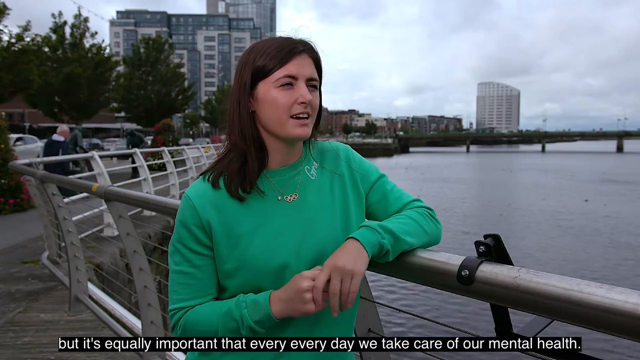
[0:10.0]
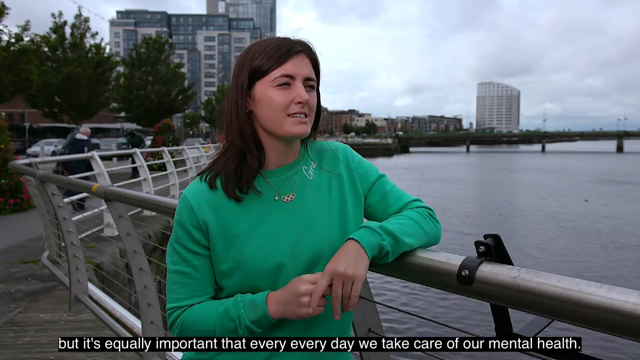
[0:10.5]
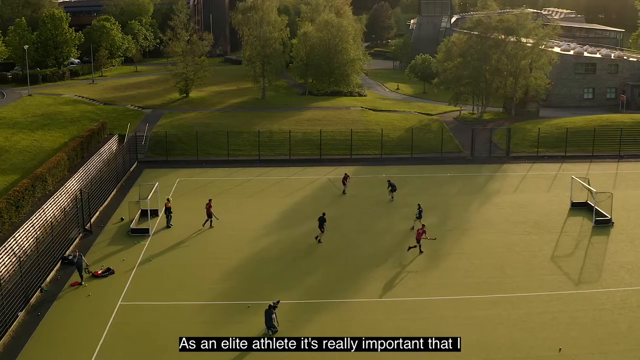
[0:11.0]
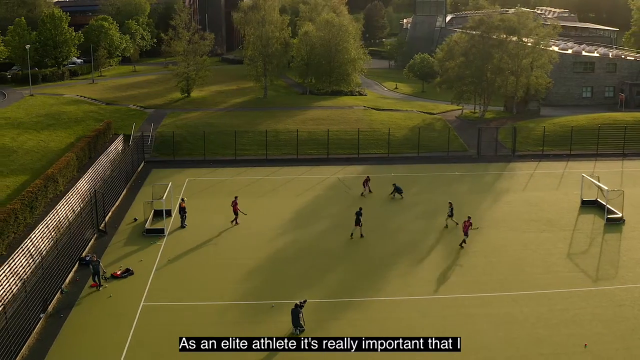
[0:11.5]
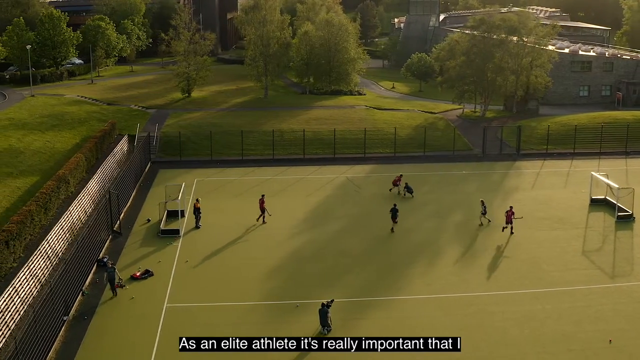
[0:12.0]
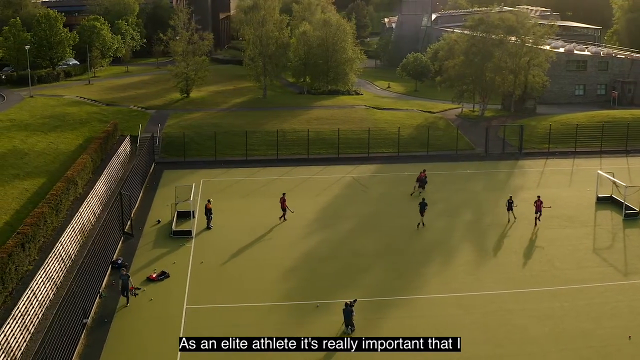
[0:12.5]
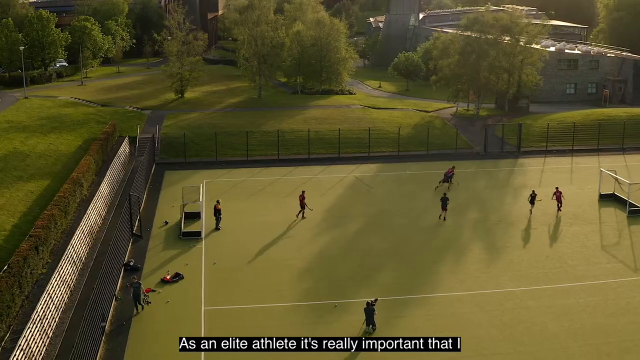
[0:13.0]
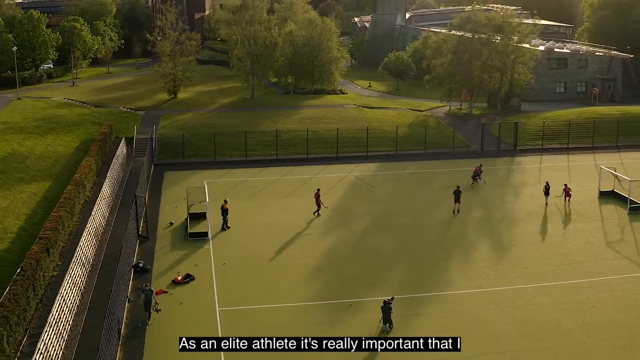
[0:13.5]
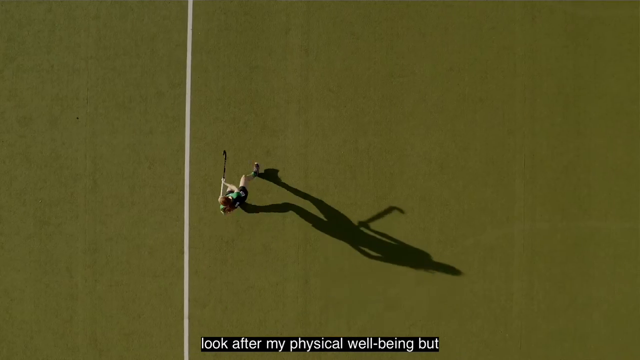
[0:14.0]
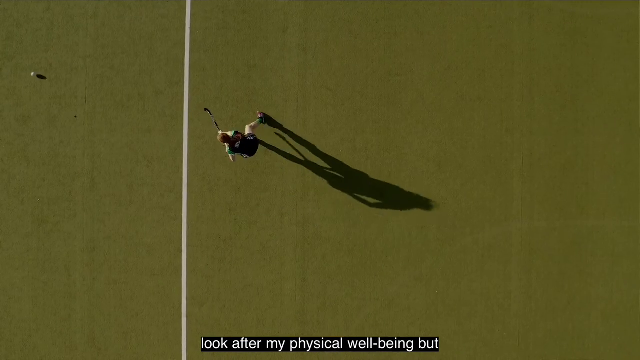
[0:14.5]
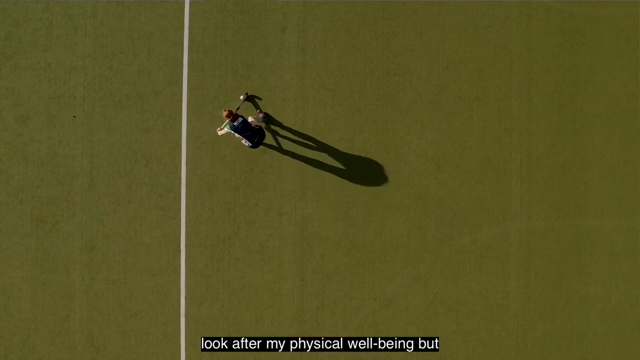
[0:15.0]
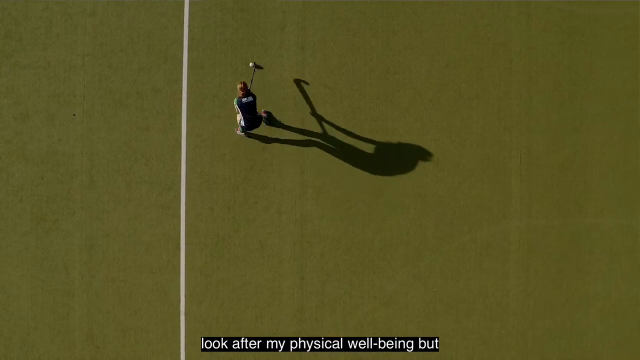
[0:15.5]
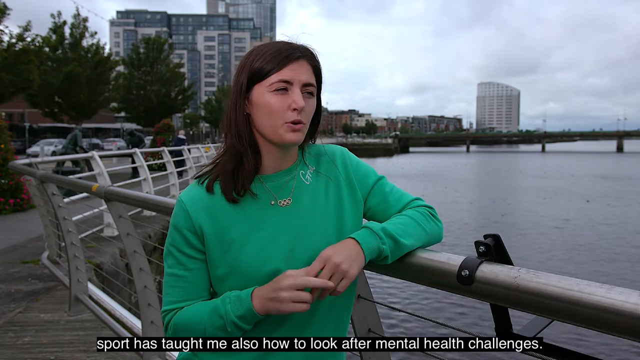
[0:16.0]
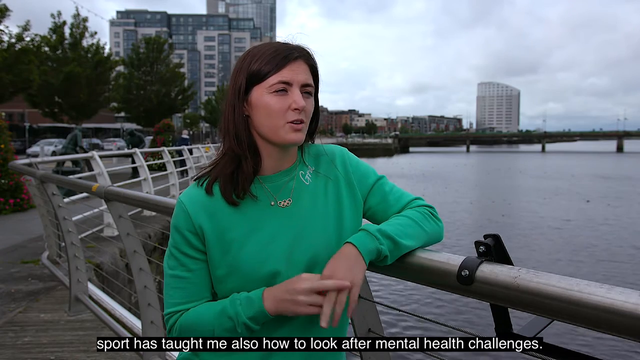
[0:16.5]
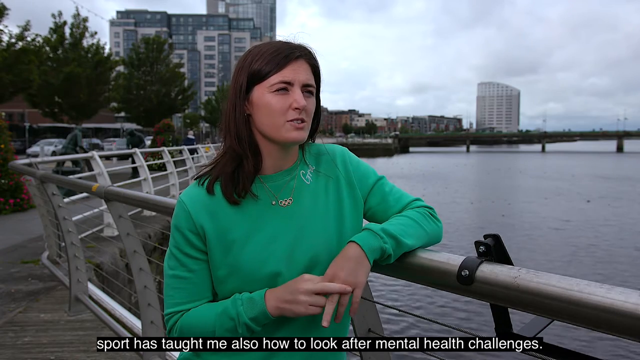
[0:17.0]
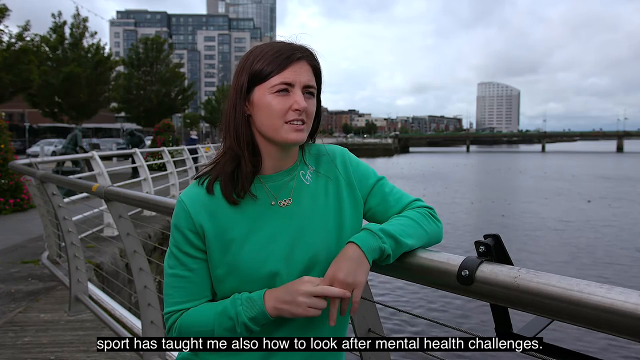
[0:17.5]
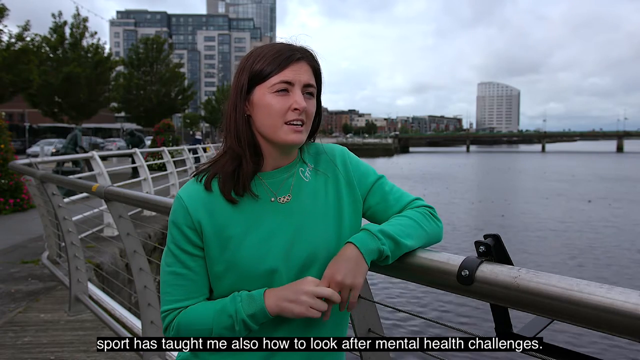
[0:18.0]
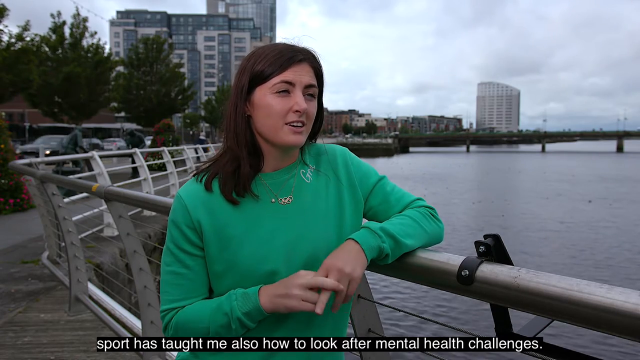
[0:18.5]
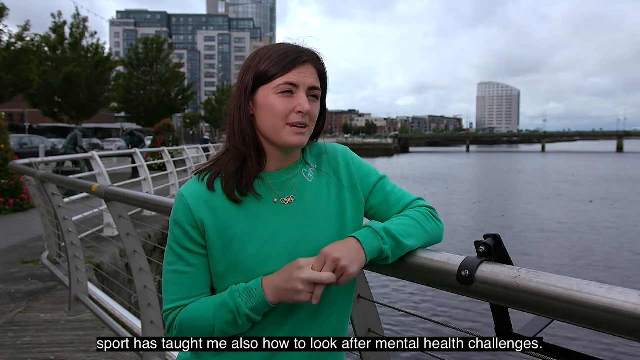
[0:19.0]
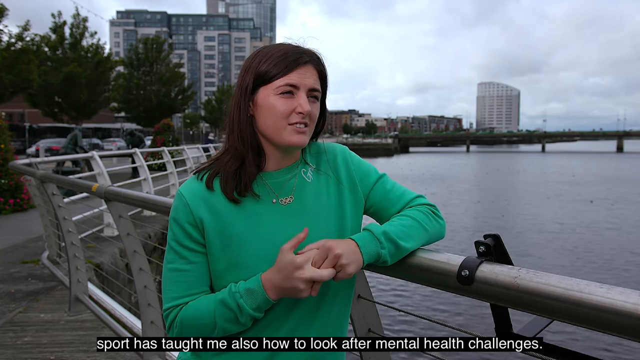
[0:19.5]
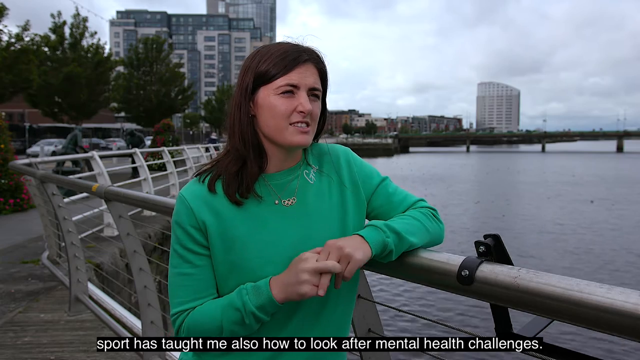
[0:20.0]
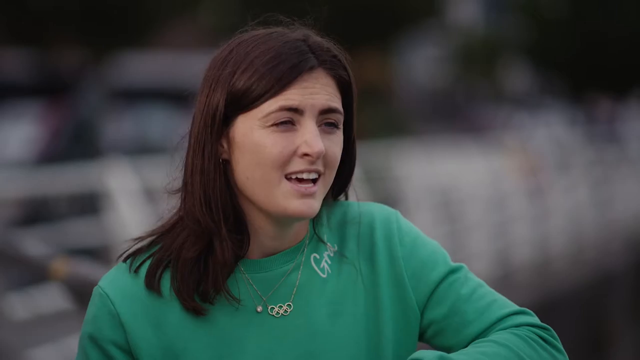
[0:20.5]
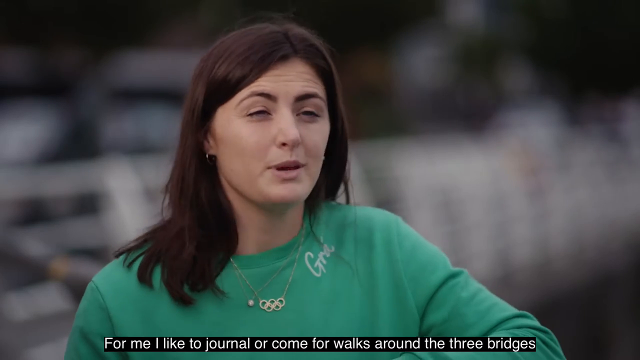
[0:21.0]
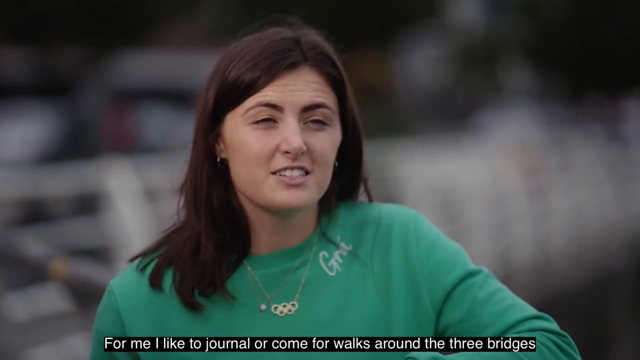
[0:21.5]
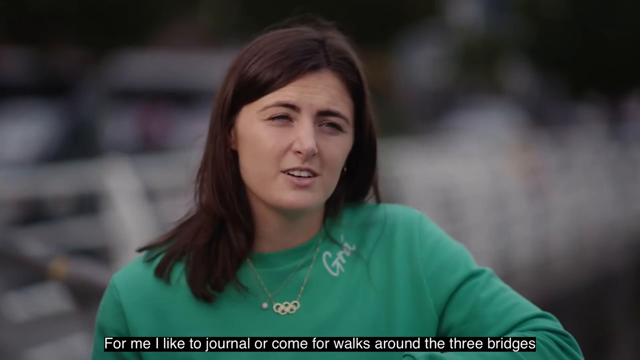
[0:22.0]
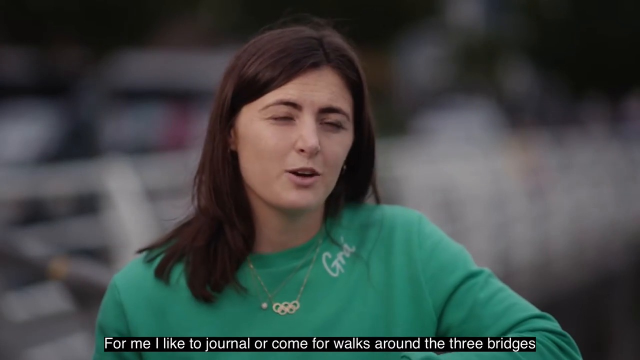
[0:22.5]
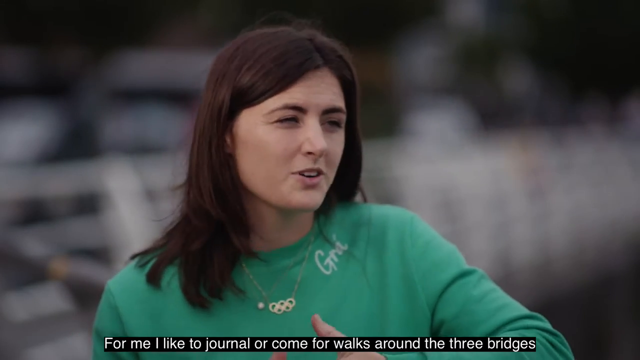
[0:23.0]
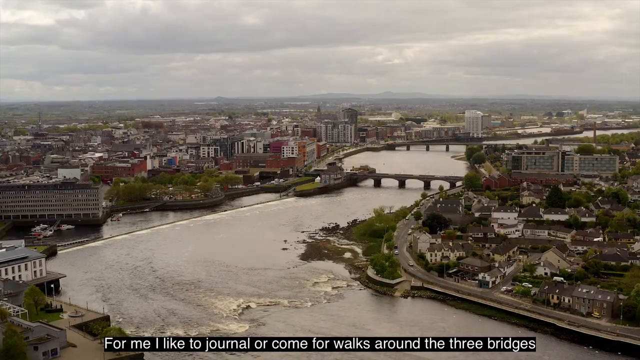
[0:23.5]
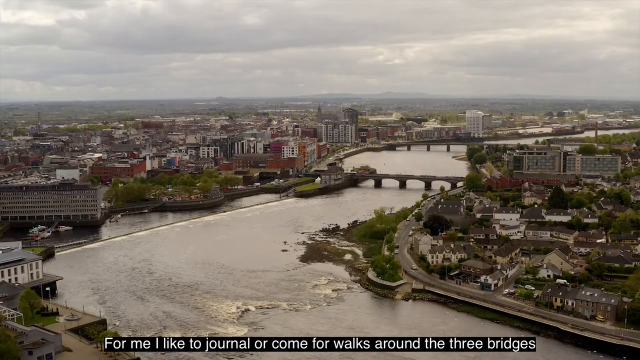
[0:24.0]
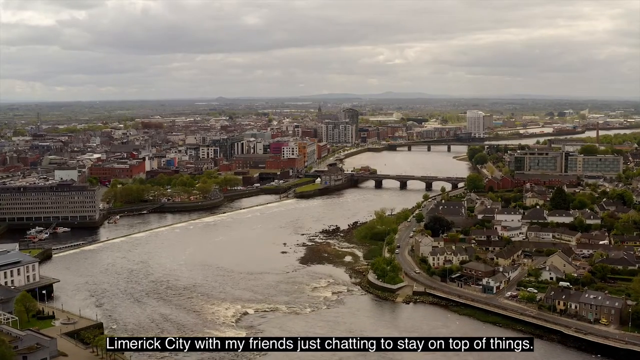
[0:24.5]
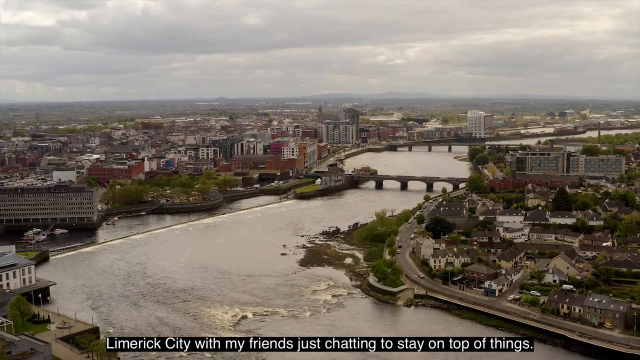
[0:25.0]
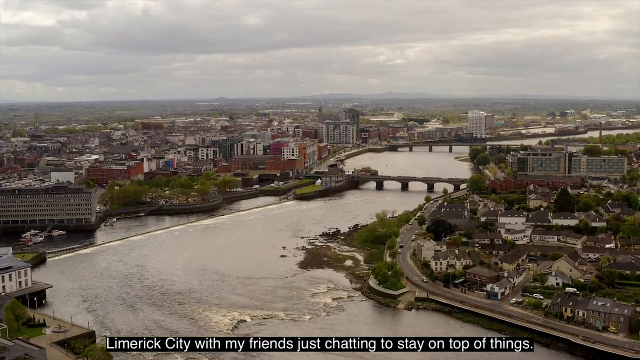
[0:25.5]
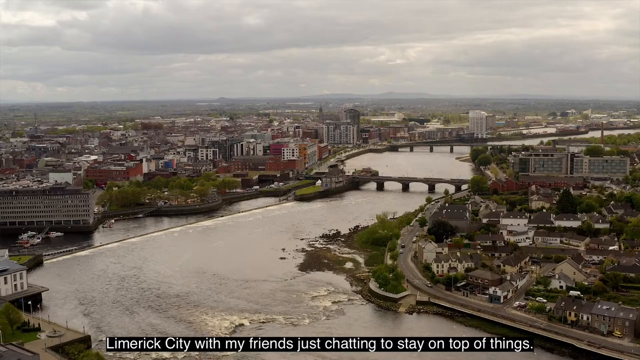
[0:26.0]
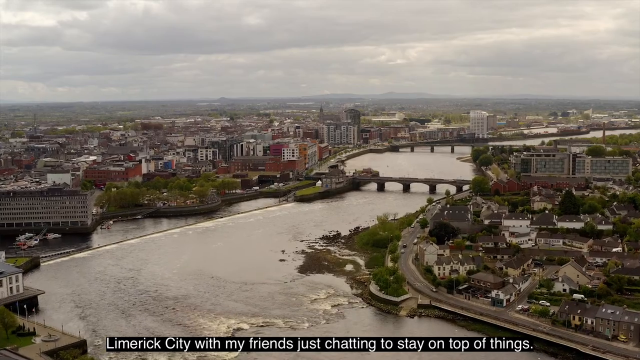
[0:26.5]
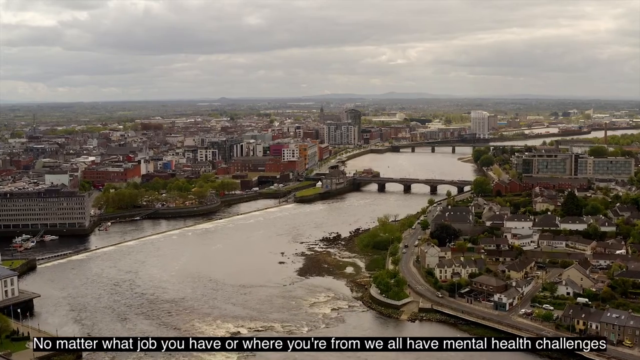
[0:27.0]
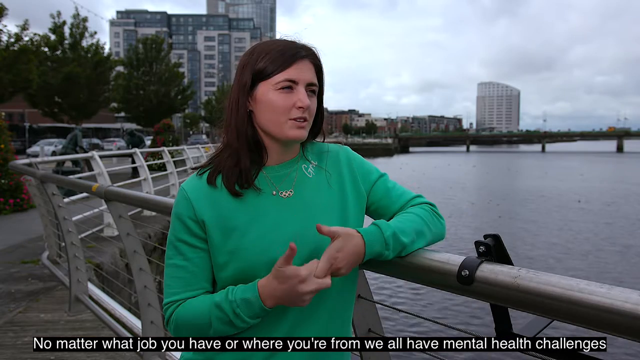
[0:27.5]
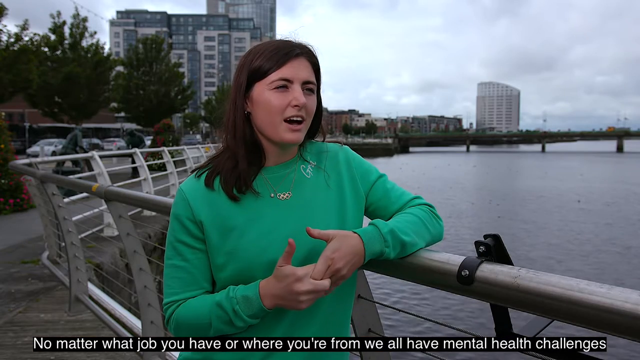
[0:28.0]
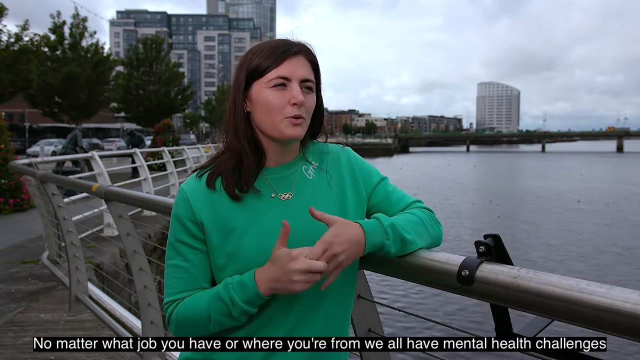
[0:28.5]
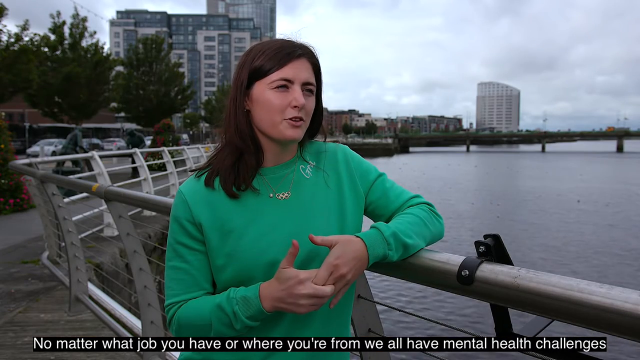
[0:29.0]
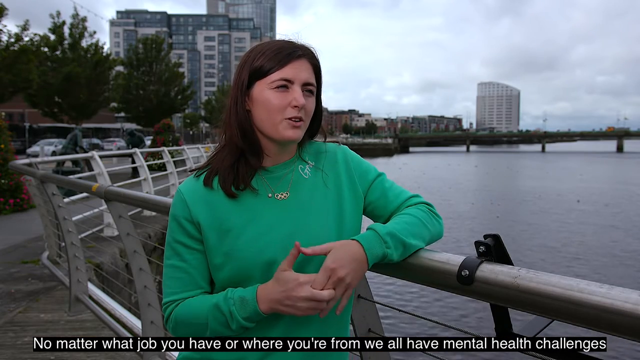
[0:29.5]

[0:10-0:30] The woman is shown being interviewed, then a brief cut shows an aerial view of some sort of sport being played on a large green field, where people with what look like hockey pucks hit around a ball. The video cuts back to the interviewee, who speaks to the camera while cupping her hands in front of her chest. A closer view of her follows. The video then cuts to an aerial view of the city, with a river in the center and the urban area on both sides of it, and two what appear to be stone bridges going over the river. It cuts back to the woman continuing to speak to the camera. She wears a green shirt and a gold necklace, and there is some indistinct white text on the top right of the shirt.